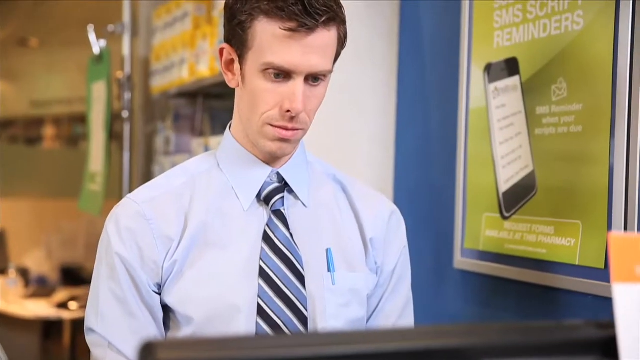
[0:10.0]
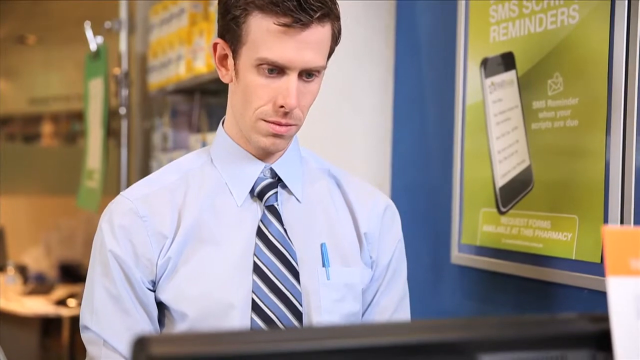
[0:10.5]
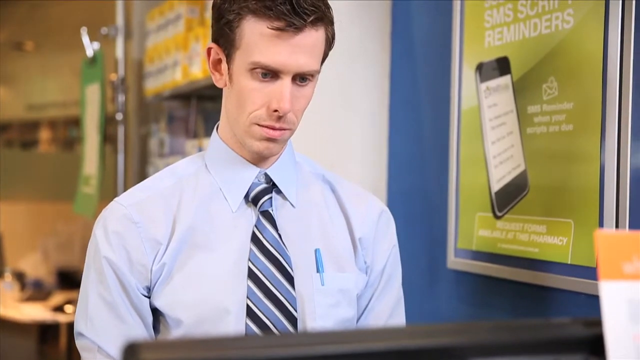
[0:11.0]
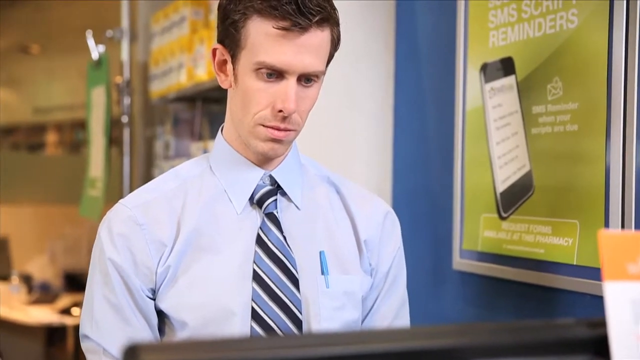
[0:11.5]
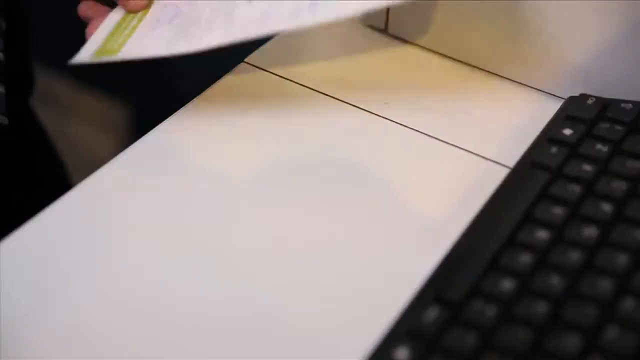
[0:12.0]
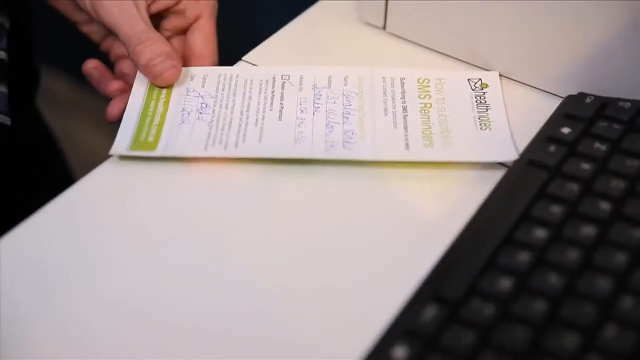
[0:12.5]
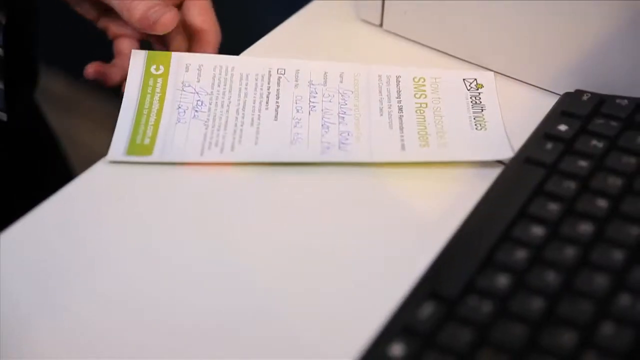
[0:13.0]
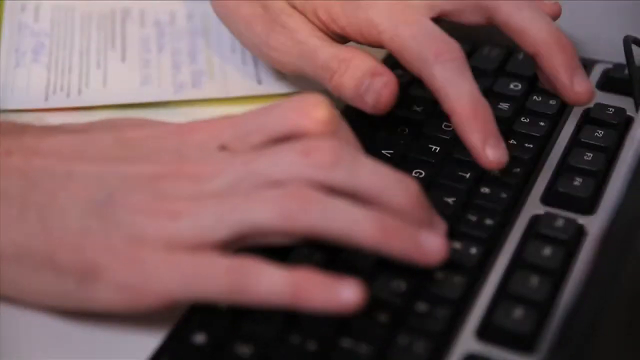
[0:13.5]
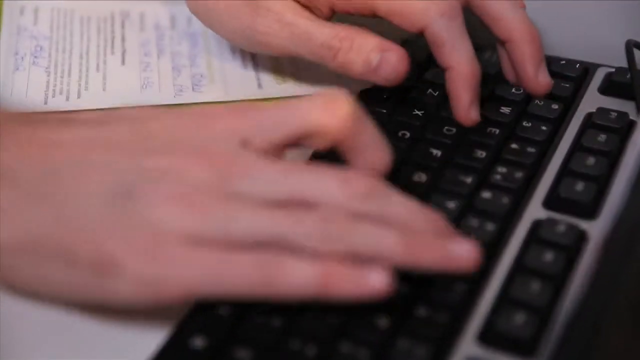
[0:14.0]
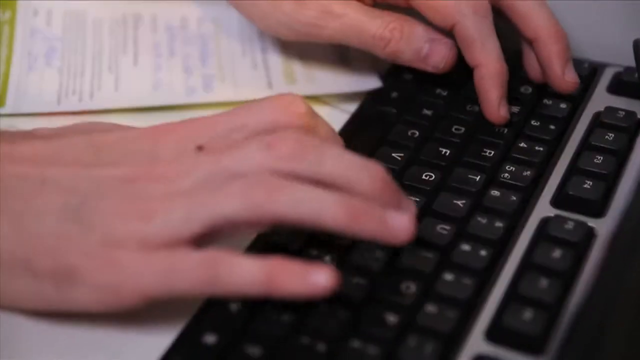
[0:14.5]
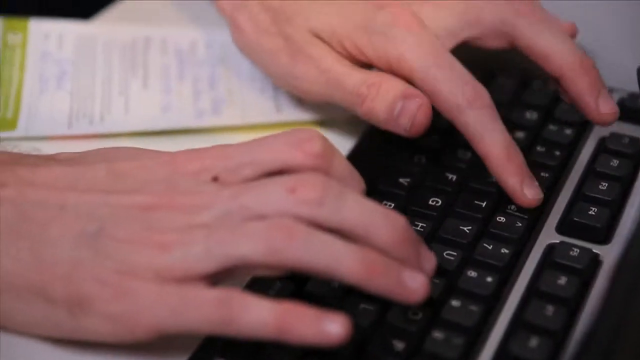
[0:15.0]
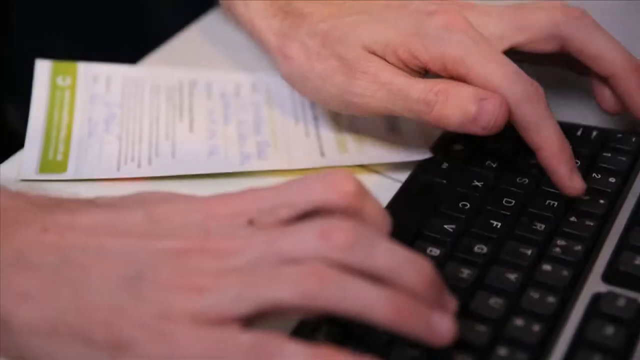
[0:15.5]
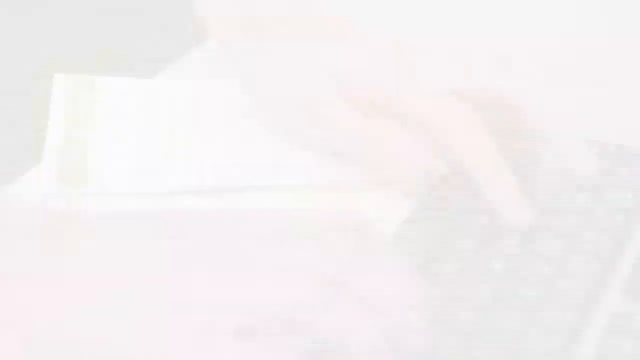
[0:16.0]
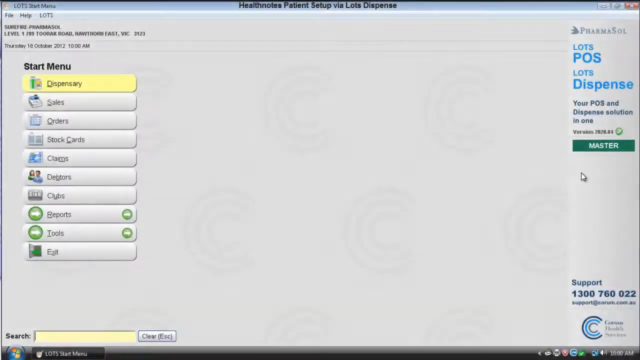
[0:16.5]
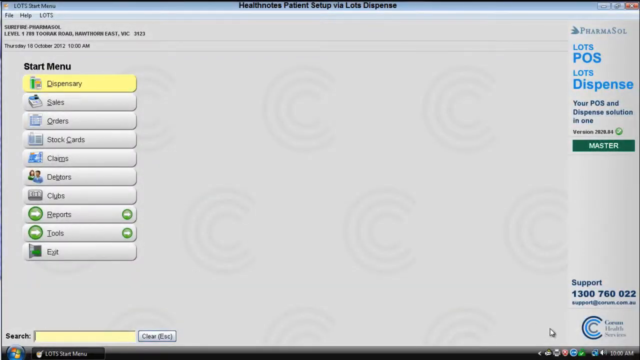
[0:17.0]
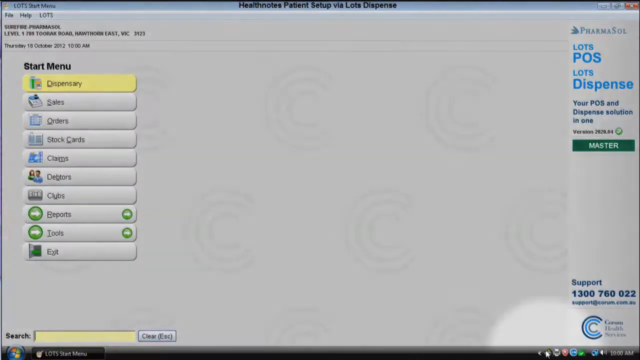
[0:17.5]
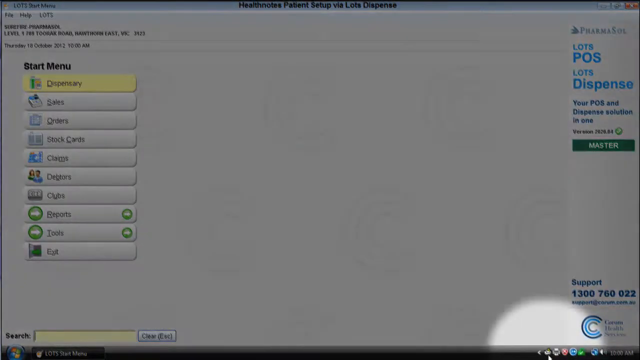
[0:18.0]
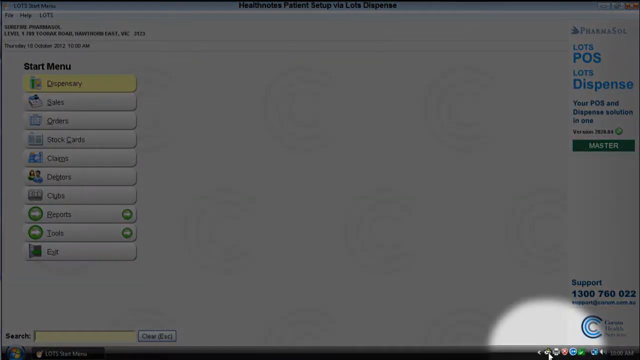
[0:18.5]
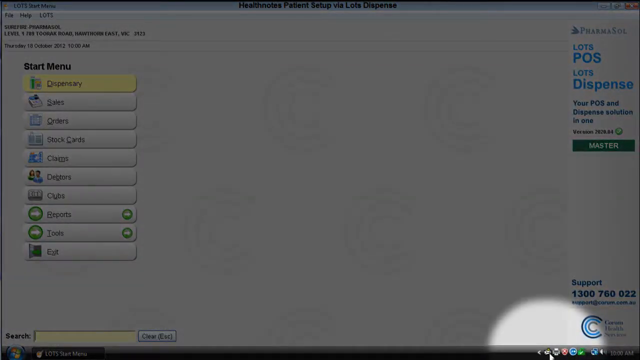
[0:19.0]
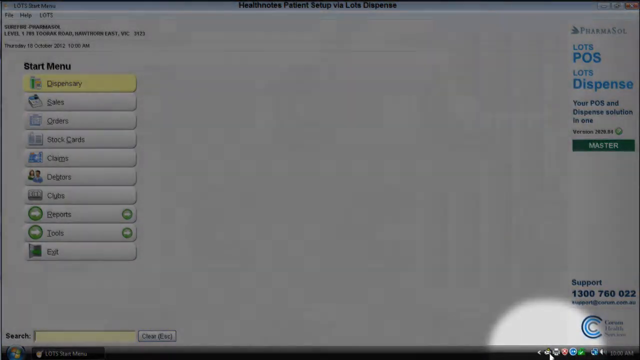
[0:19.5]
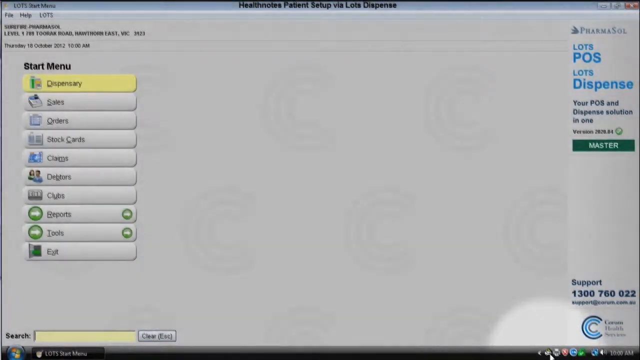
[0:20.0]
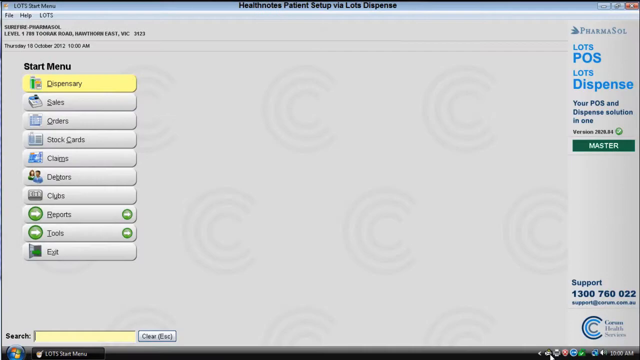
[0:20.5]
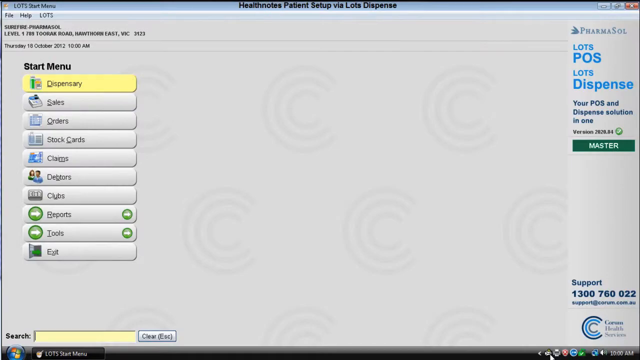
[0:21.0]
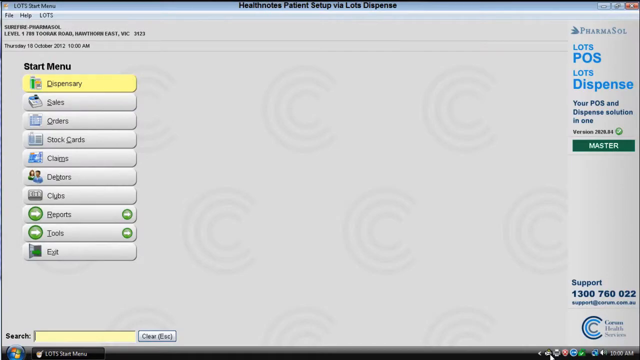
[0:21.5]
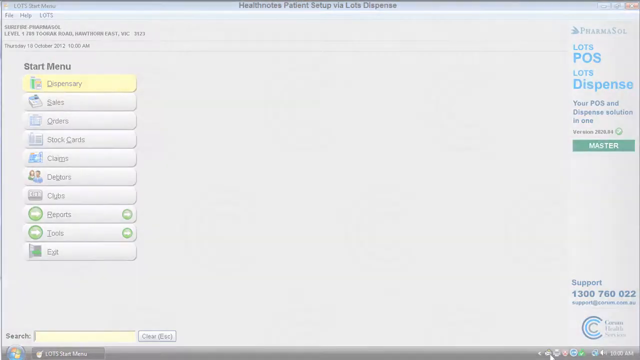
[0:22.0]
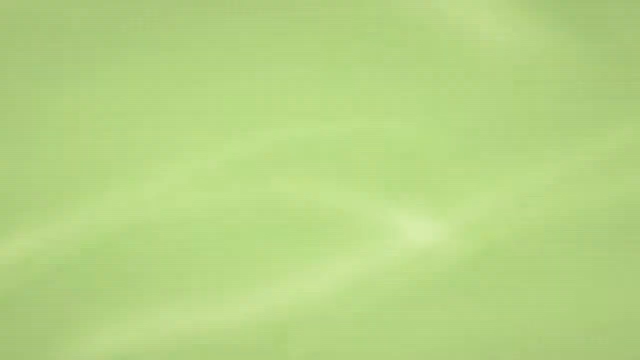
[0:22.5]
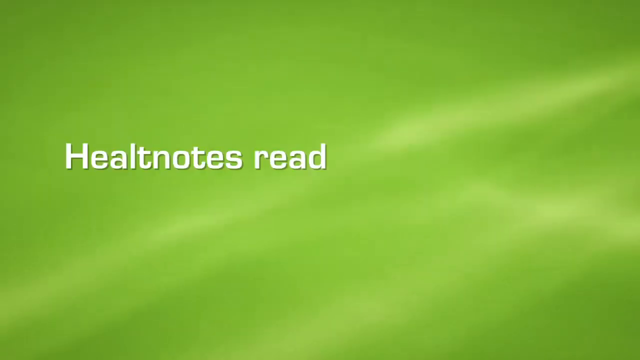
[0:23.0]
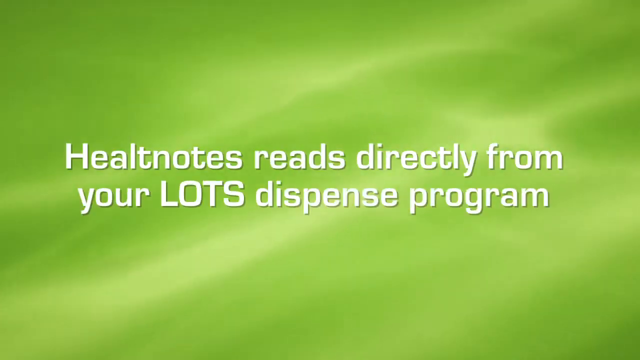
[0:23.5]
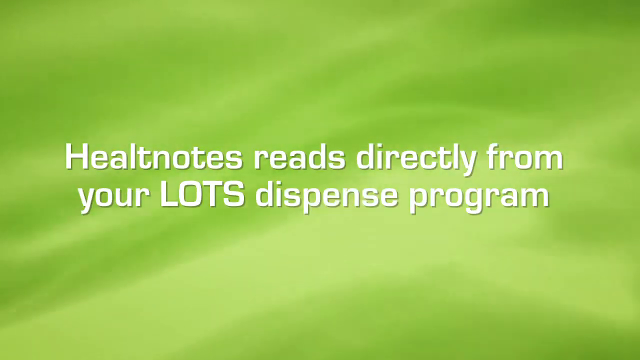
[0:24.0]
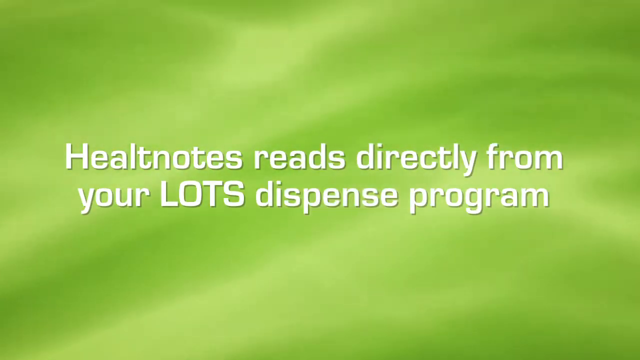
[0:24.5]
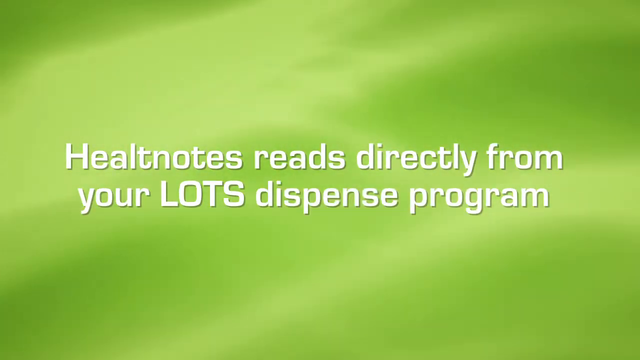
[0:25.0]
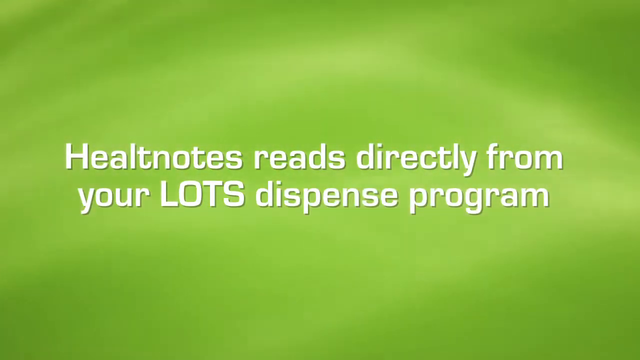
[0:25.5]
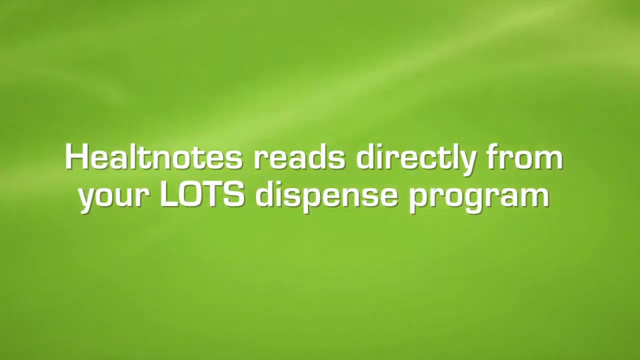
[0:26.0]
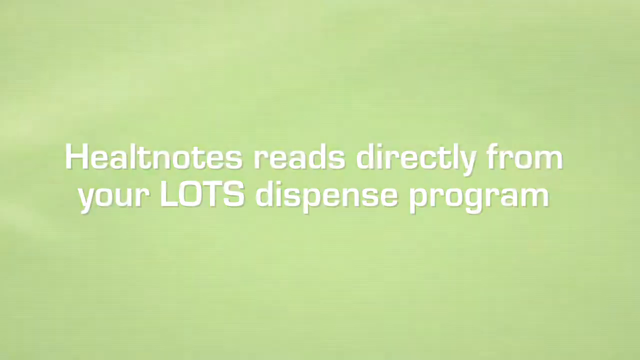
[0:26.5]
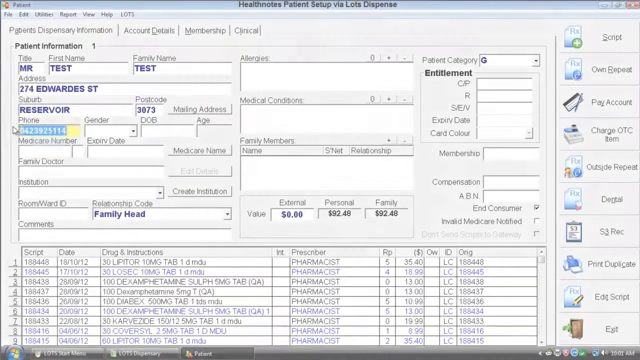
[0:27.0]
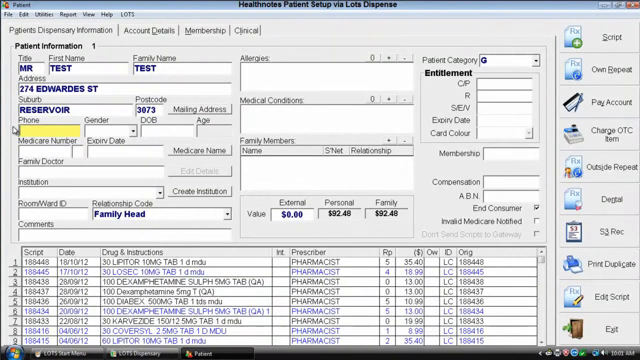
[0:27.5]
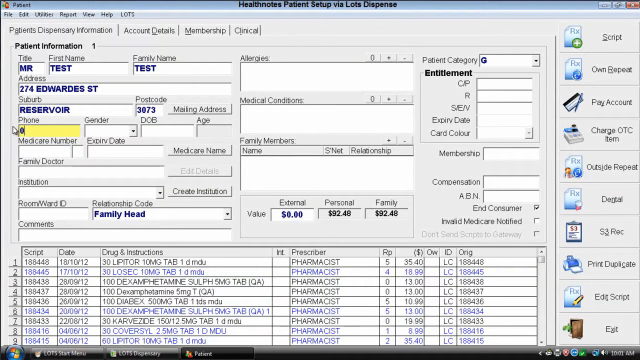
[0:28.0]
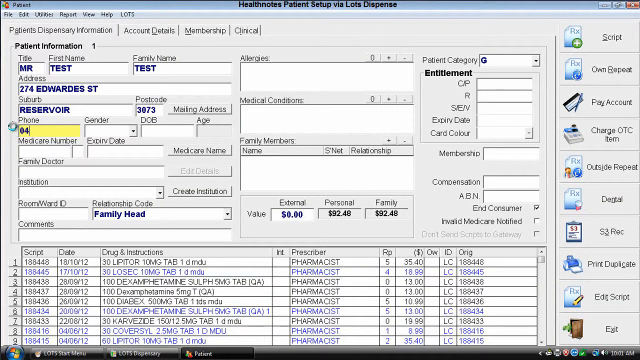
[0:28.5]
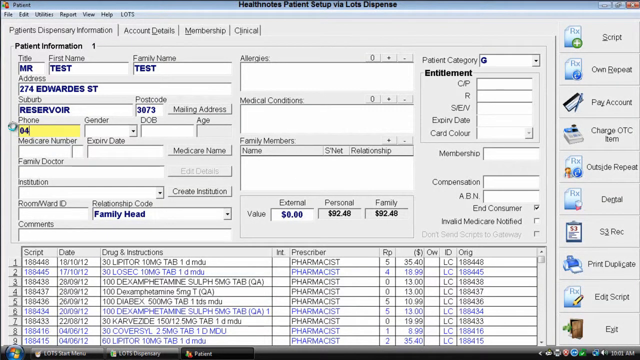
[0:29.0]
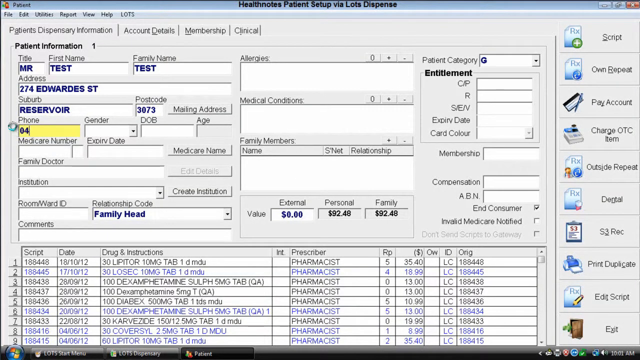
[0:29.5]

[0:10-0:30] In the store, the man puts down a form titled "How to Subscribe to SMS Reminders," with the healthnotes logo at the top of the page. The form has text input fields for his name, address and some other information, and he places it down onto the desk. A close-up follows of hands typing on a keyboard. The scene then changes to what looks to be the screen of an app. At the top it says "healthnotes patient setup via lots dispense," and on the left side it says "lots start menu." There is a column of buttons labelled "start menu" on top; from the top, there is a button that says "dispensary," followed by buttons for sales orders, stock cards, claims, debtors, clubs, reports, tools and exit, most likely the different options available in the app.